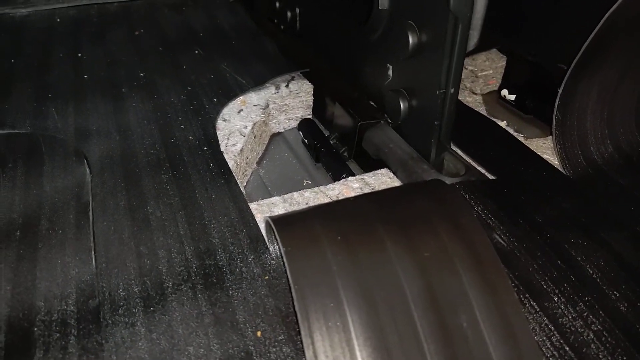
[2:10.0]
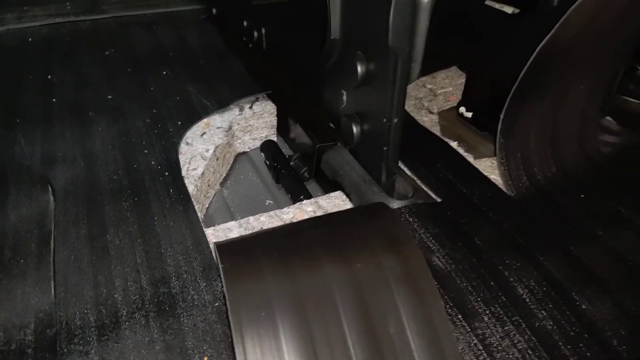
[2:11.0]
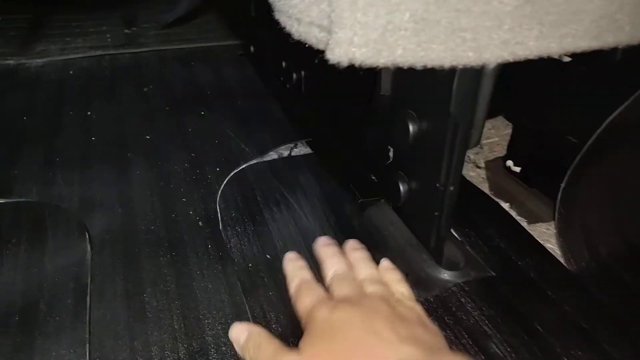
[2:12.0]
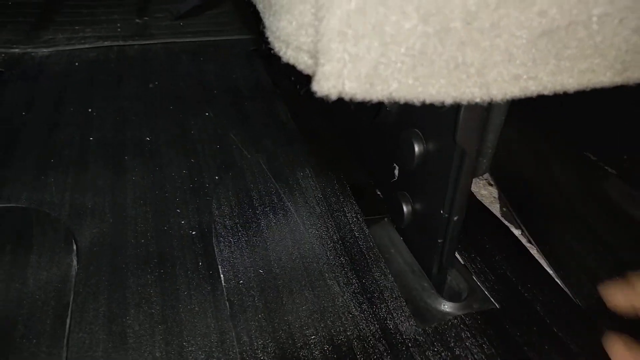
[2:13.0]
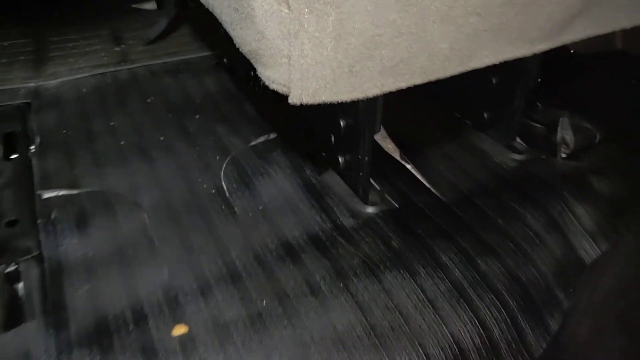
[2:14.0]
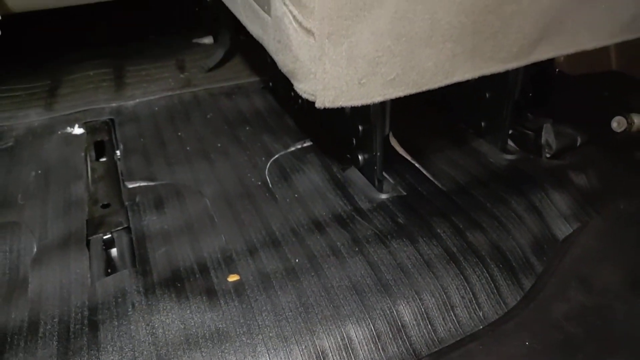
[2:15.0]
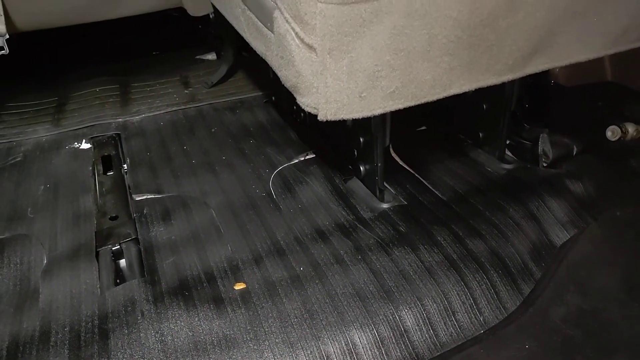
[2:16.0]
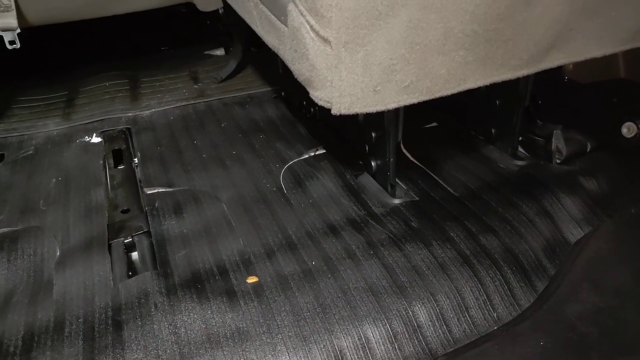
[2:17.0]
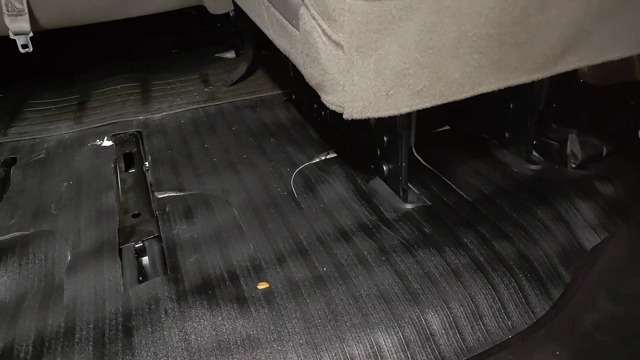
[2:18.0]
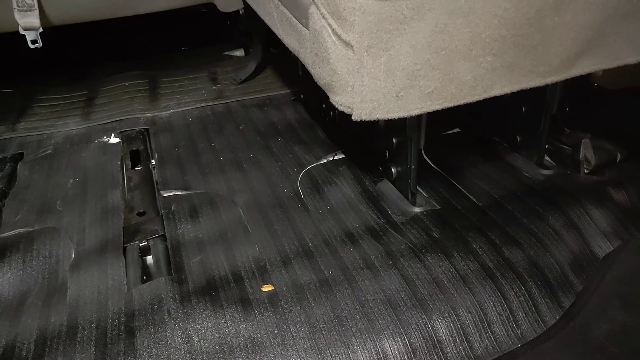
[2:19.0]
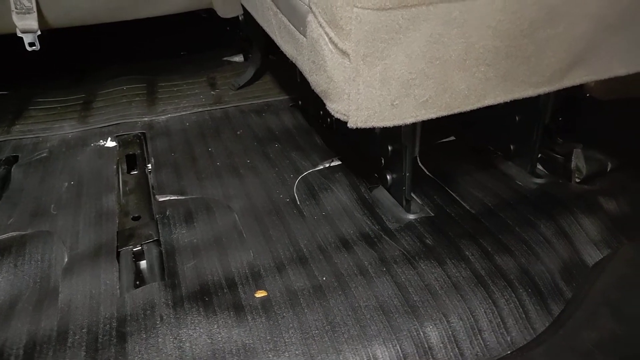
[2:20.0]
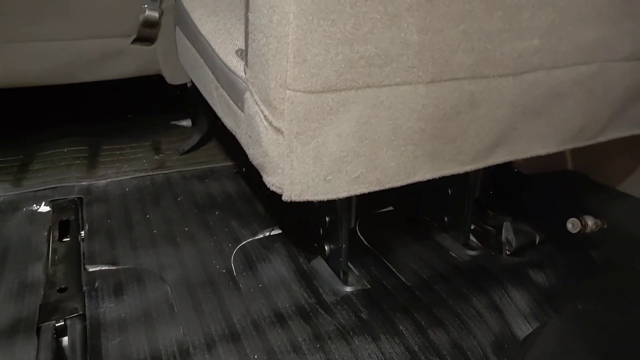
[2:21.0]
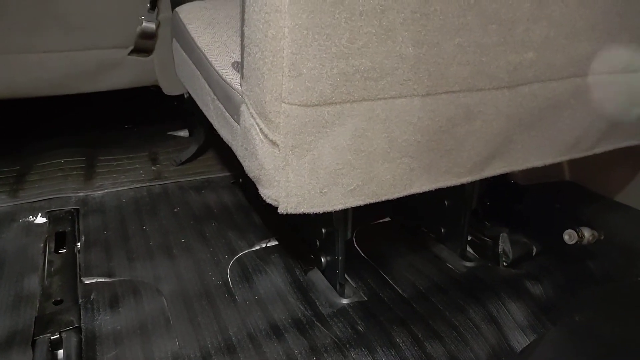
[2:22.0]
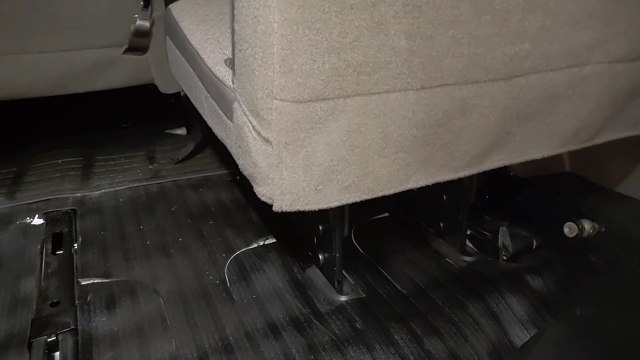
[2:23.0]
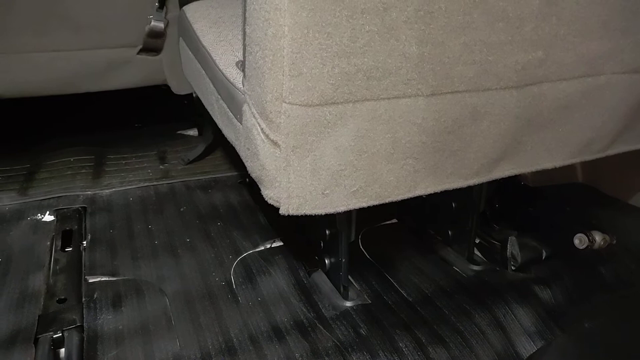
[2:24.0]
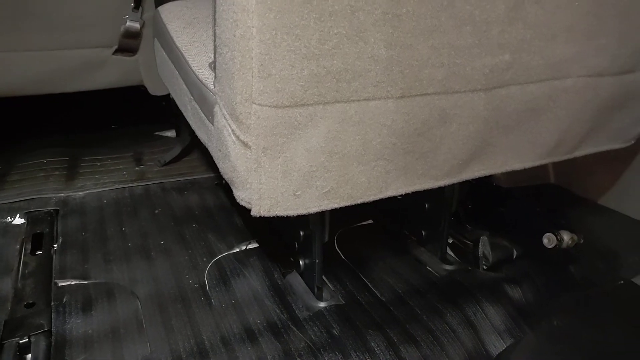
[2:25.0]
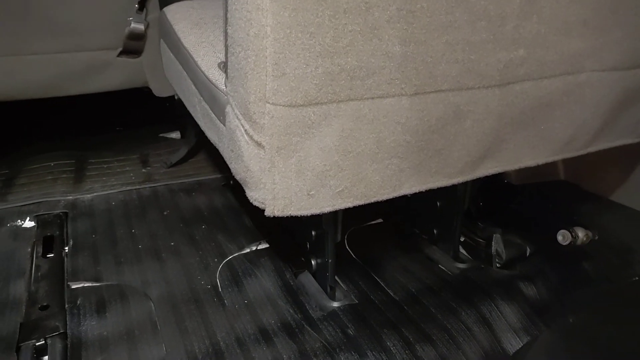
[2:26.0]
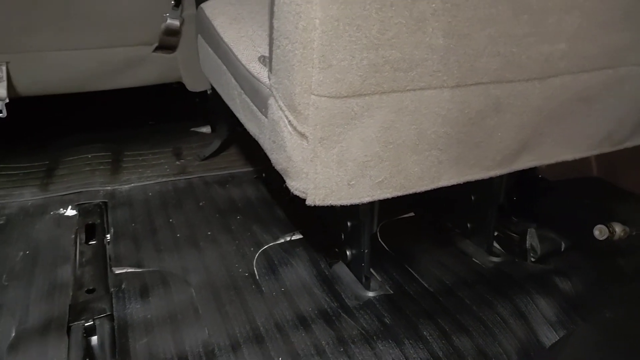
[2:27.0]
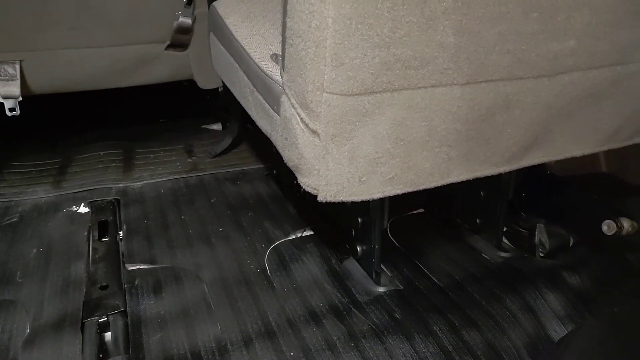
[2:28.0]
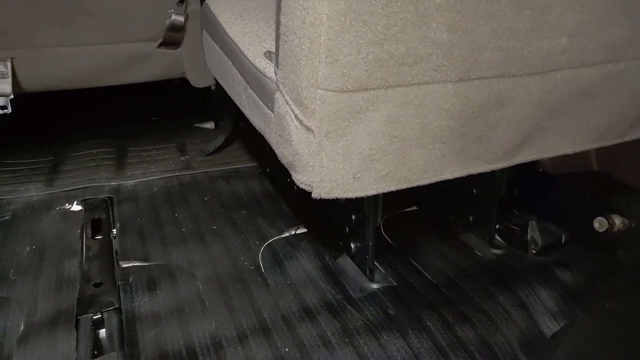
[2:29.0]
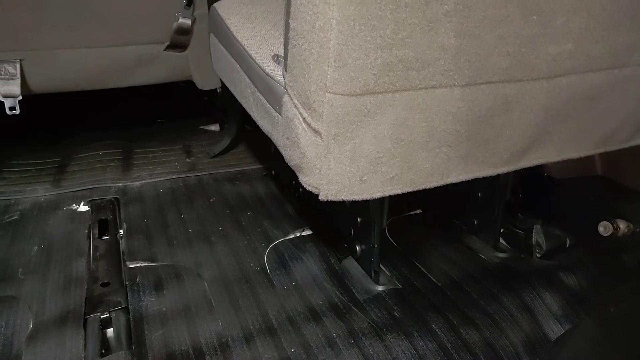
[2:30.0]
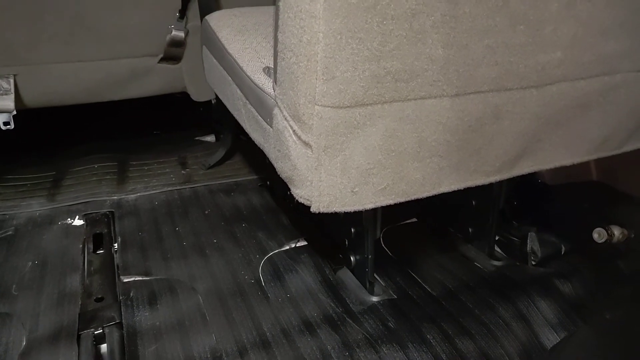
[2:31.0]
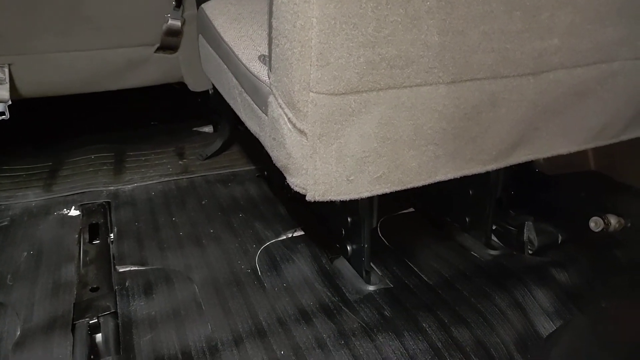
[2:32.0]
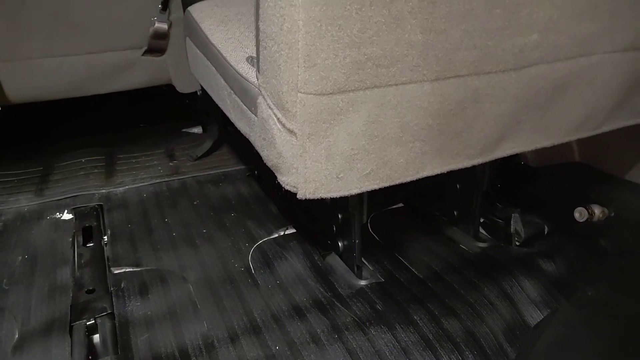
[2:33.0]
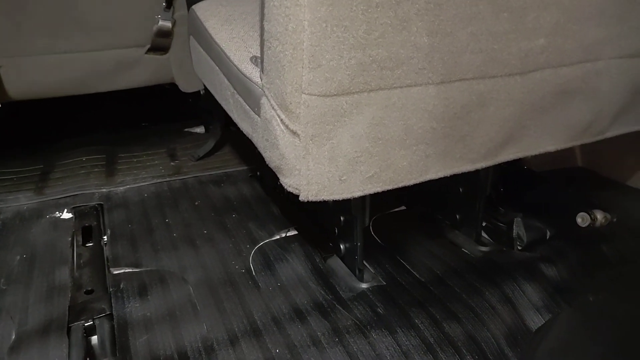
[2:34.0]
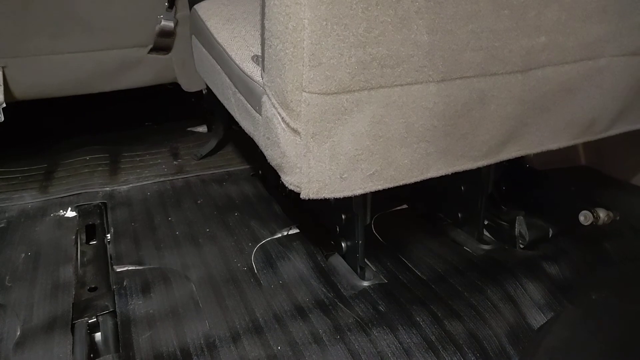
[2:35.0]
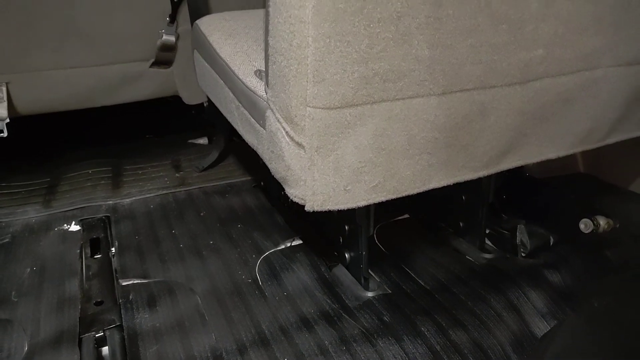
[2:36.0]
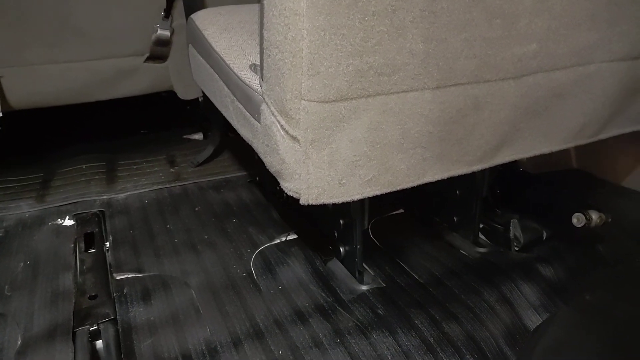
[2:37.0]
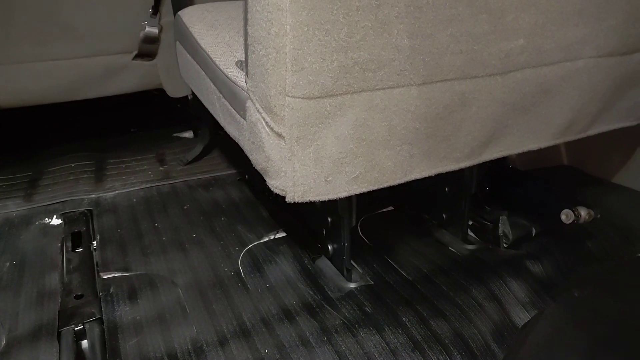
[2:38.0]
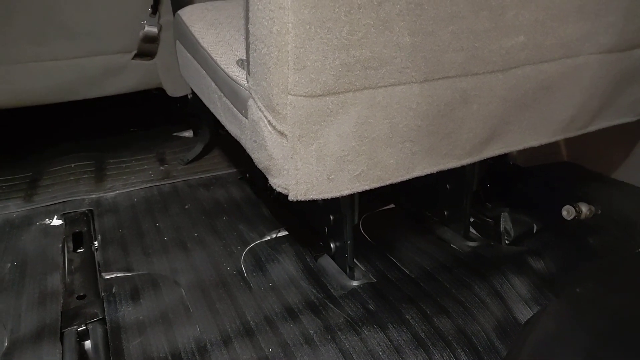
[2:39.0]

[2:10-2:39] The person uses their right hand to fold down the thin matting strip covering the metal lever in the white polystyrene recess on the left-hand side of the left seat support. They move the same hand to their right and do the same with the matting strip covering the white polystyrene recess and lever to the right of the left-hand seat support, then pat it down. The camera moves back slightly, and the person's right hand briefly comes into shot on the far right of the screen. After that the camera focuses on the general area of the seat and the matting, with the back of a further seat at the top of the screen. The camera is hand held, slightly unsteady, and wobbles a little toward the end.